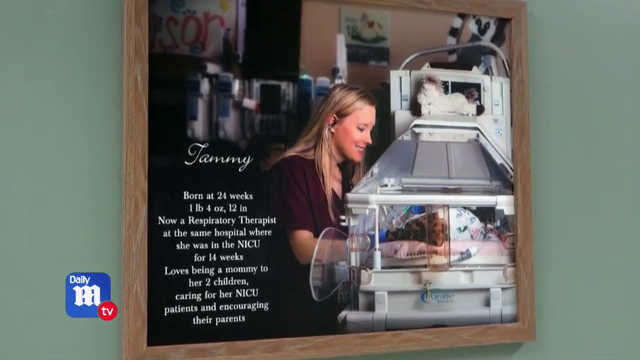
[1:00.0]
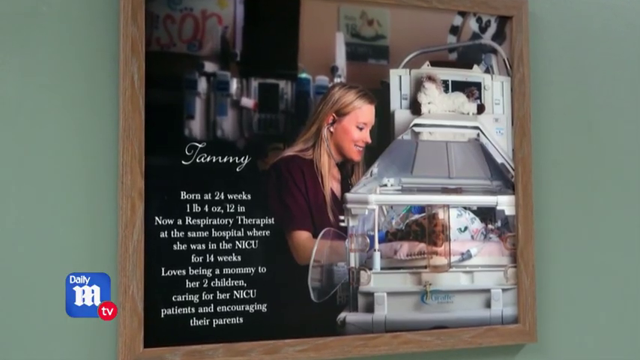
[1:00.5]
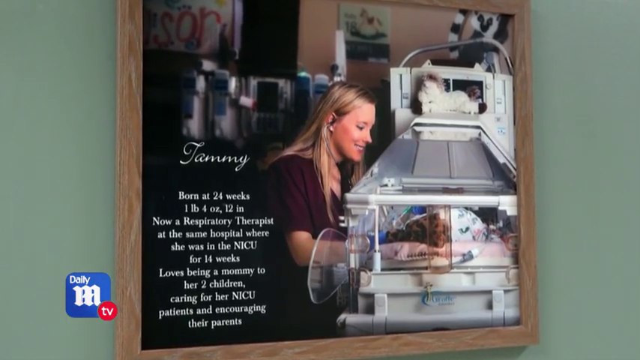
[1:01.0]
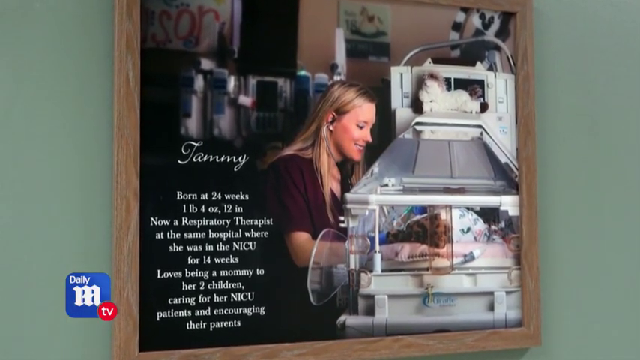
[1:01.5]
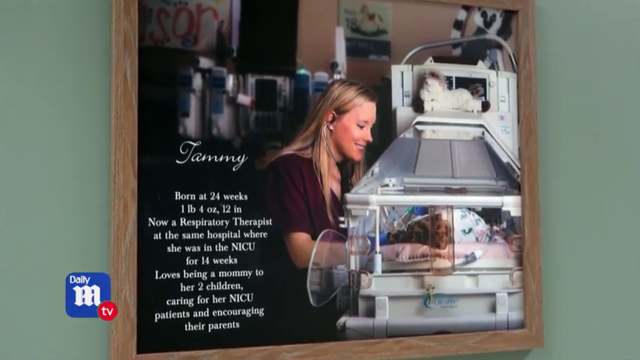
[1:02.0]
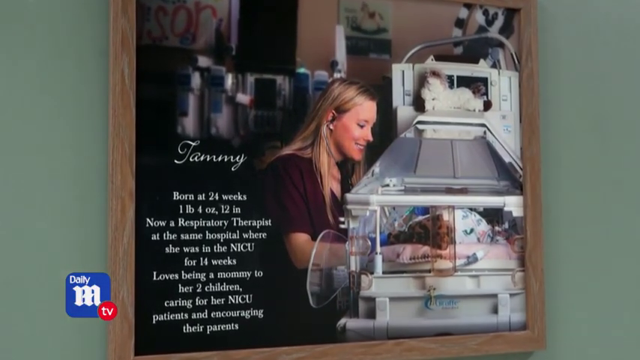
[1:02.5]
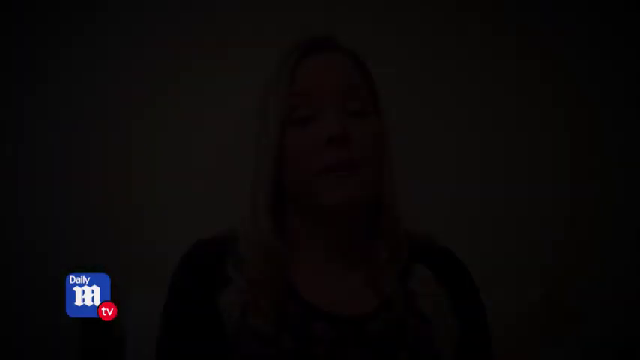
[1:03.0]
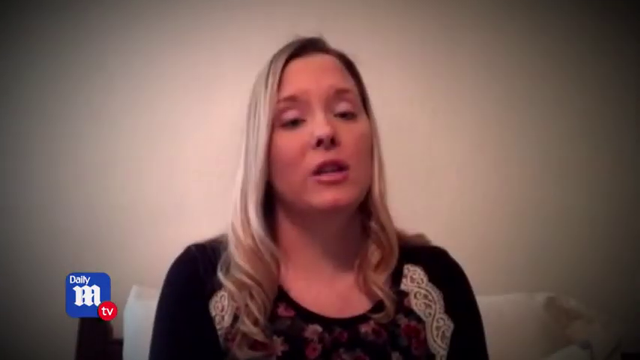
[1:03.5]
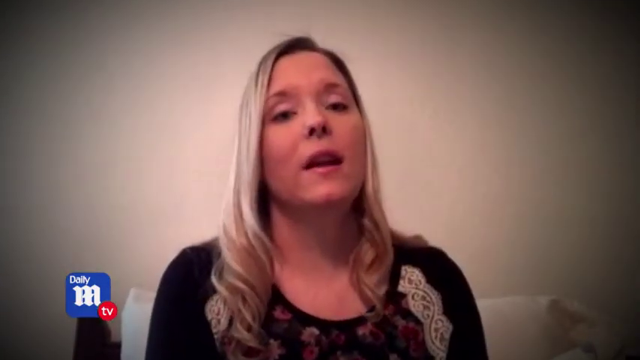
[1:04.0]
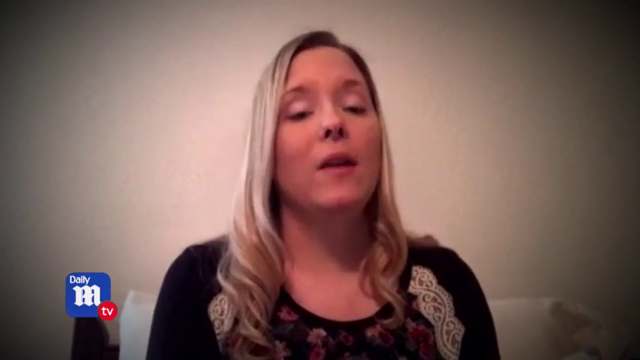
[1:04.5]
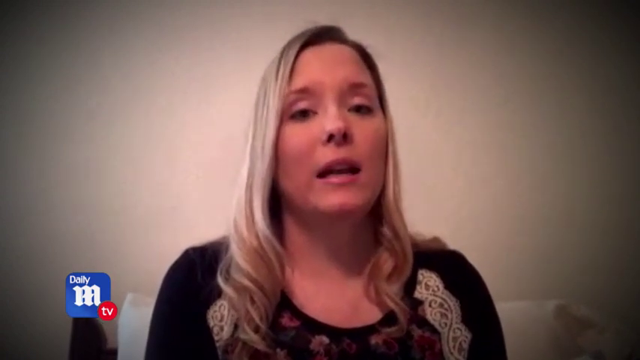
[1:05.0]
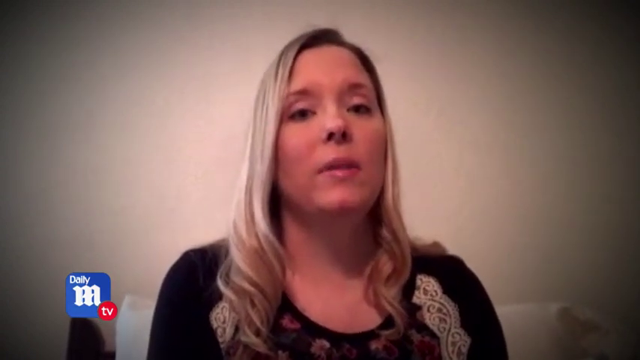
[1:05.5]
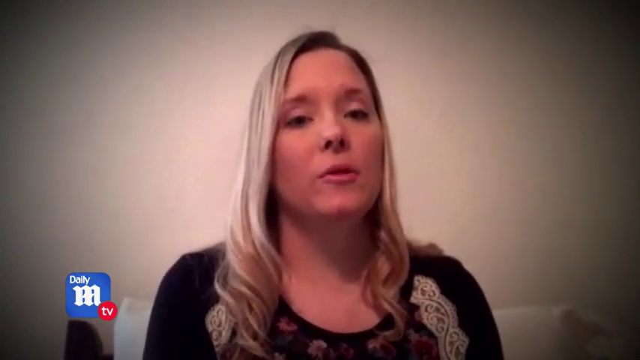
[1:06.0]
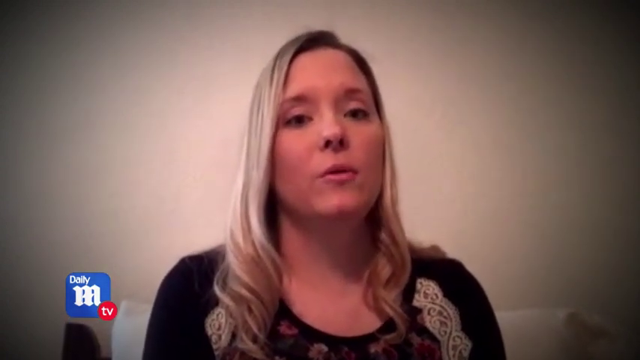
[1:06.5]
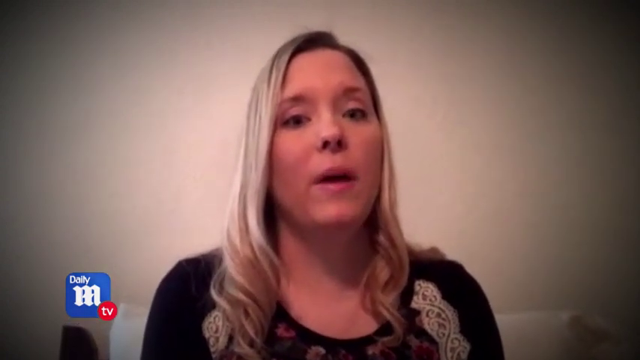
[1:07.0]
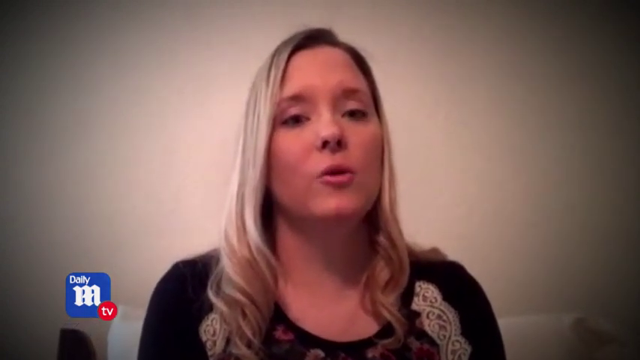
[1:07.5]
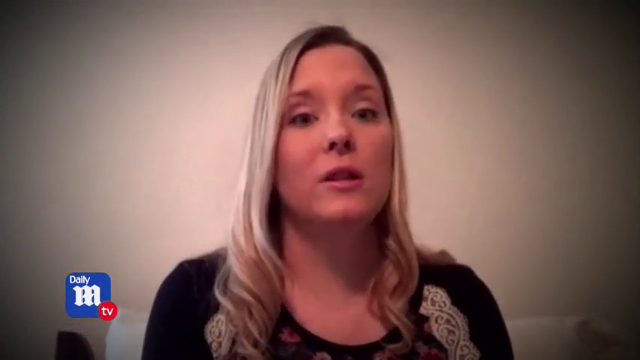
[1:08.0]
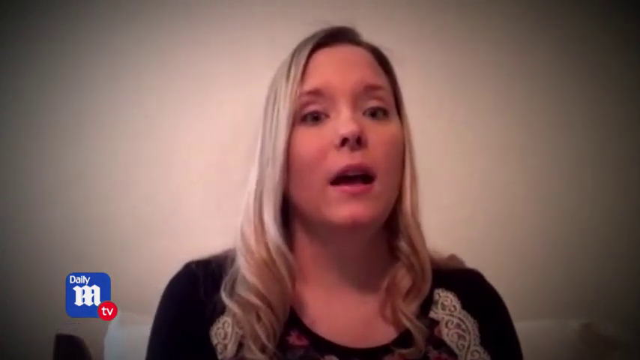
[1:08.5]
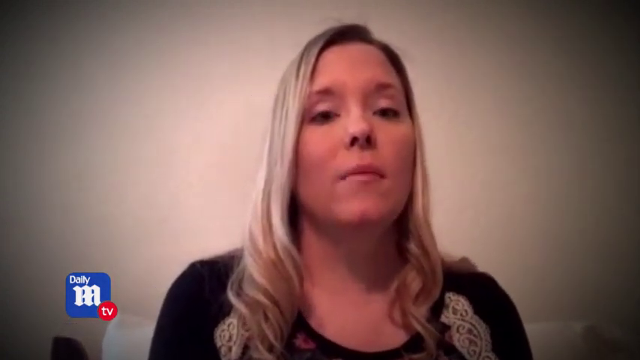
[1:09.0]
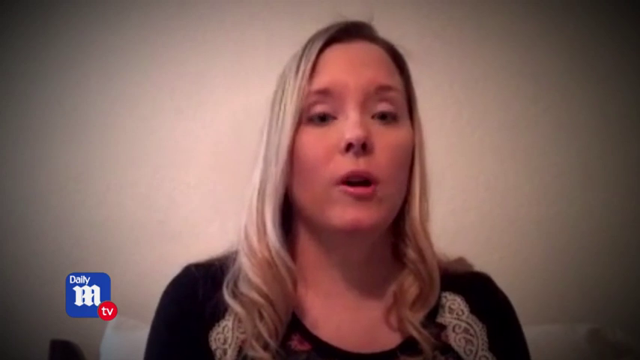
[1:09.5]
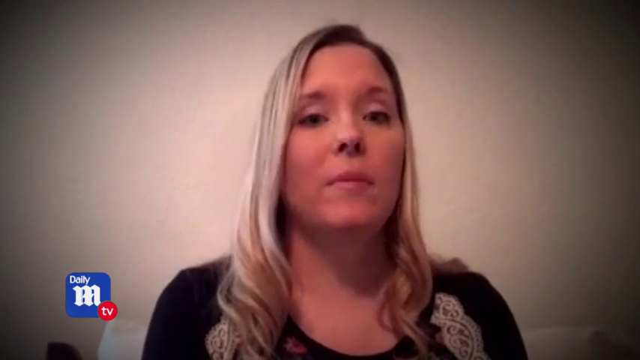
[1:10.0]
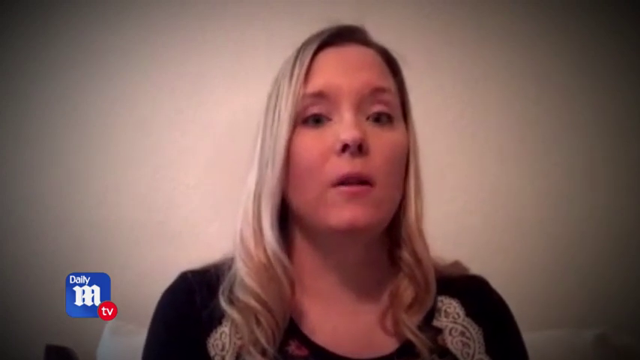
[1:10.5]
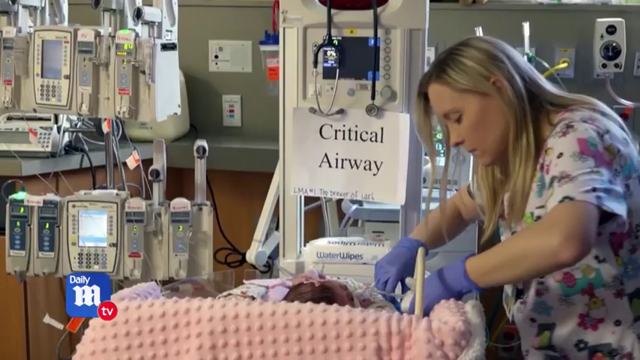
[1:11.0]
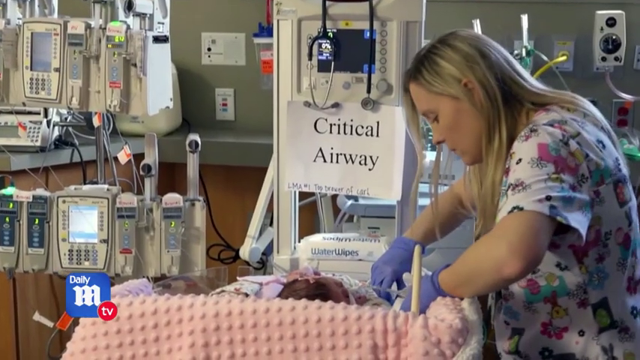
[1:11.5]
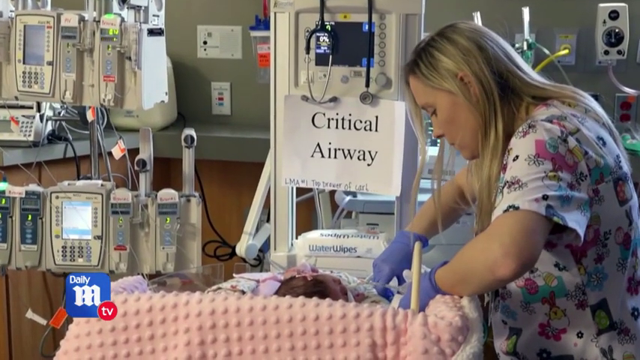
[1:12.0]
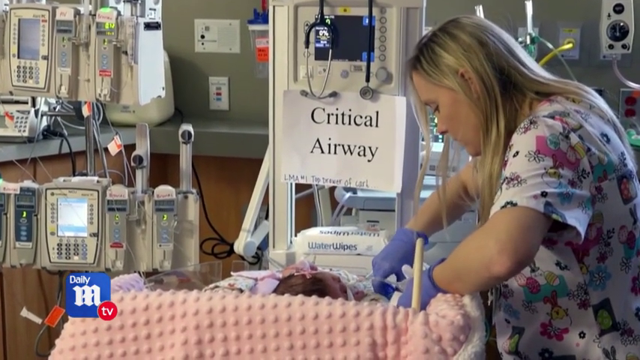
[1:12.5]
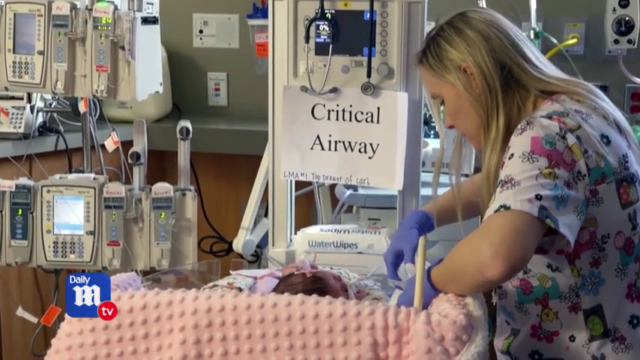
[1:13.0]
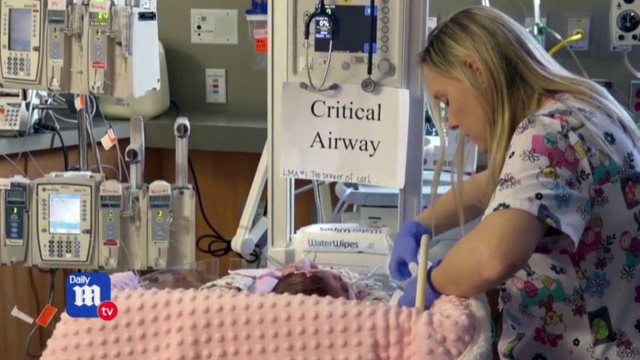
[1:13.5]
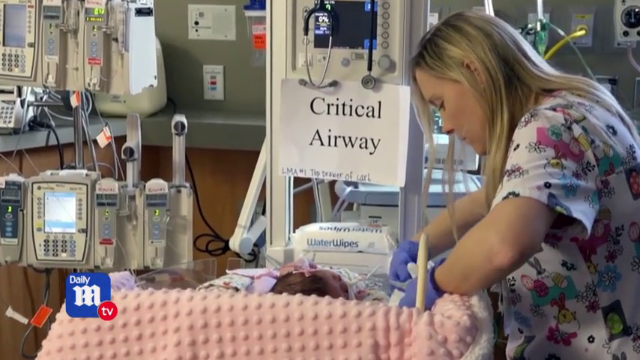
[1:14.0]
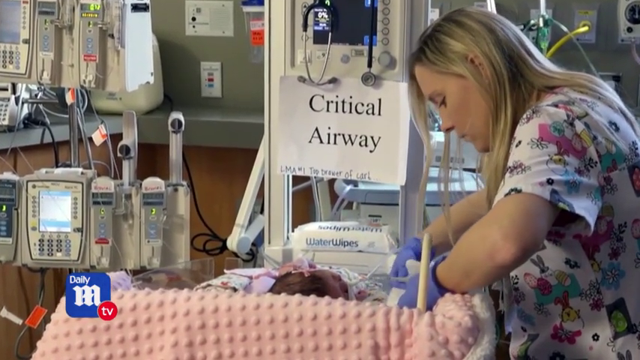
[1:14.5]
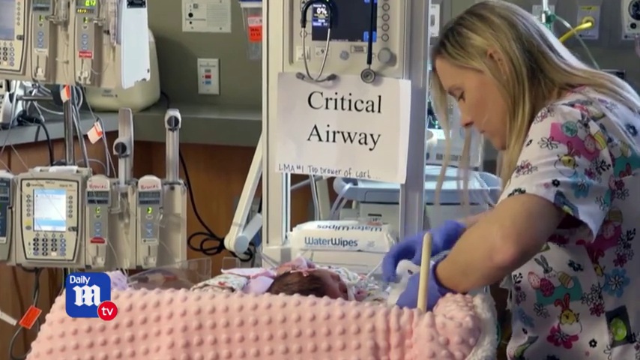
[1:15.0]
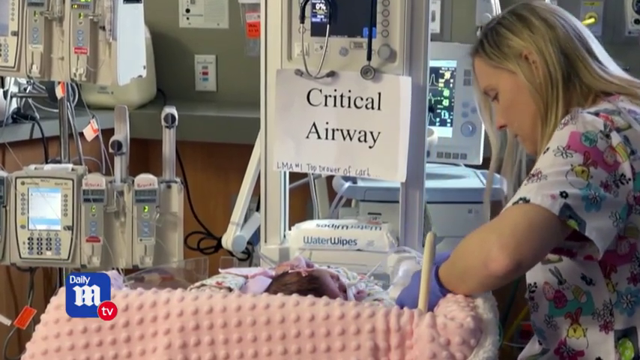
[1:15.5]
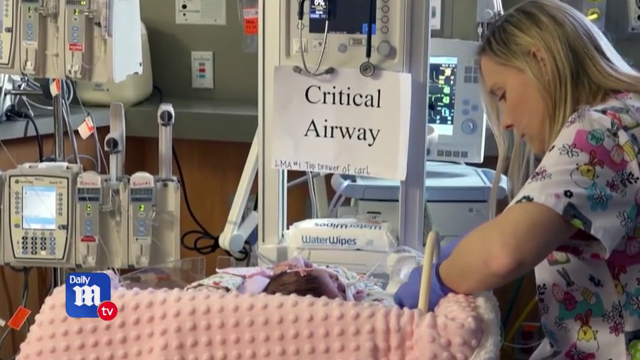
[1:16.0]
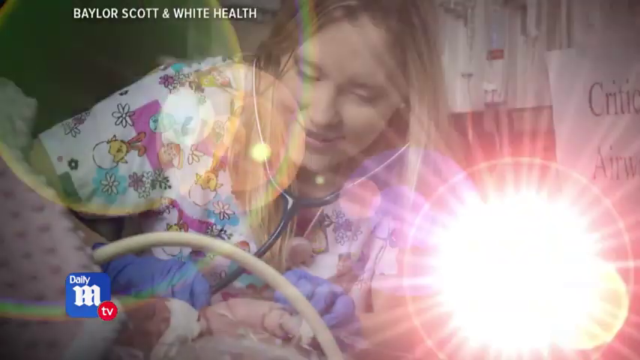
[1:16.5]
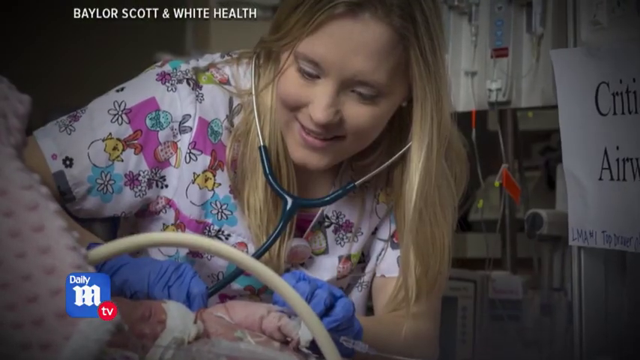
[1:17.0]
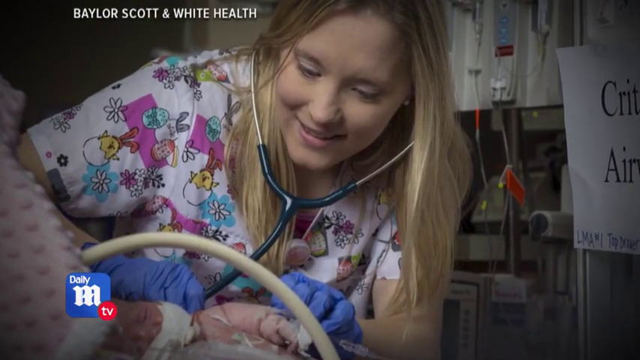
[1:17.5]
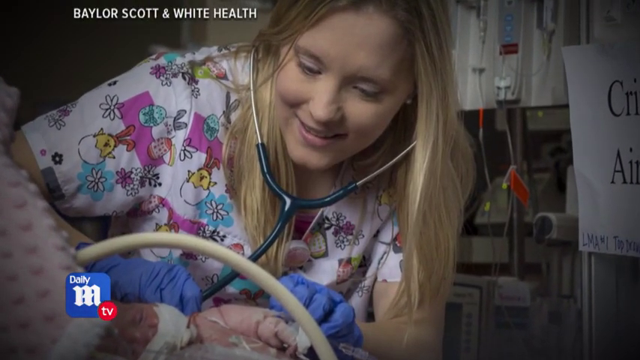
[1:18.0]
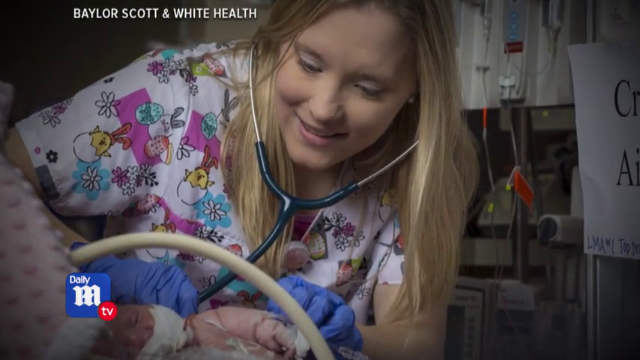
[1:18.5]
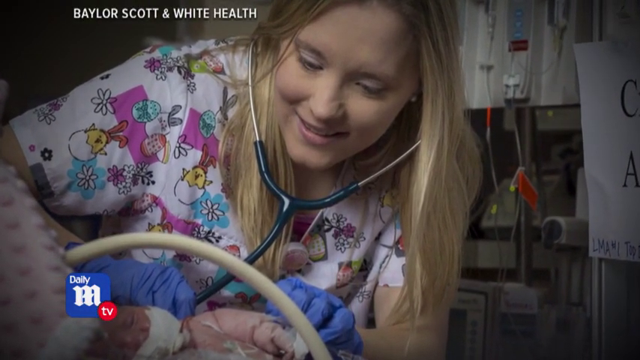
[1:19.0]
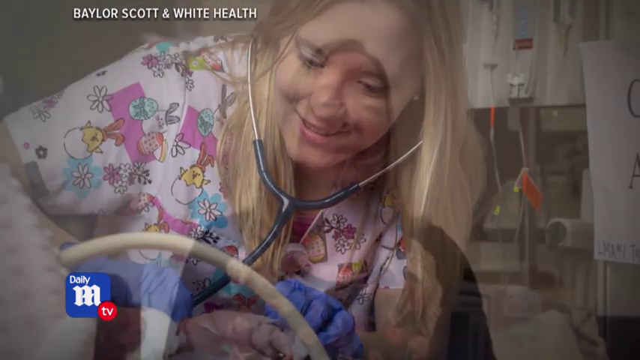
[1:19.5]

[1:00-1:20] What appears to be a framed picture of Tami's life is shown. In it, there seems to be a nurse standing next to an incubator, possibly with a child inside. Next to this picture is written "January. Born at 24 weeks, 1 pound 4oz, 12 inches and now respiratory therapist at the same hospital where she was in the NICU for 14 weeks in total. Loves being a mommy to her two children". She is then interviewed wearing a black outfit, speaking to the camera with a lot of enthusiasm. Next she is in the ward, where the writing "critical airway" appears in the image.